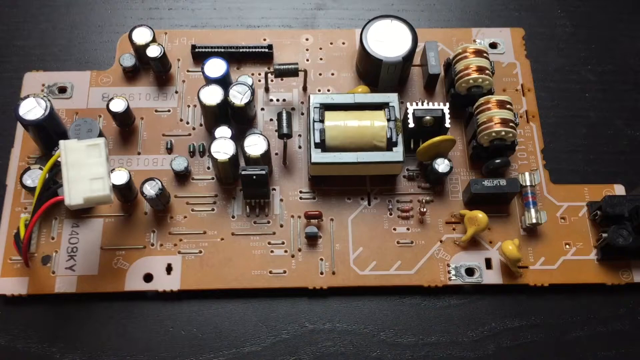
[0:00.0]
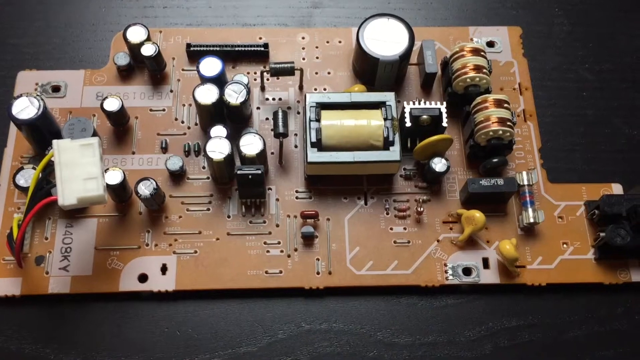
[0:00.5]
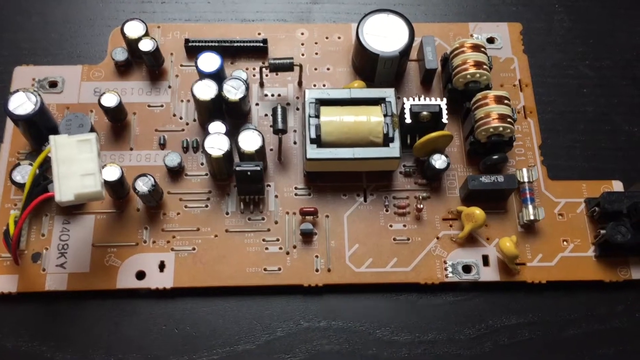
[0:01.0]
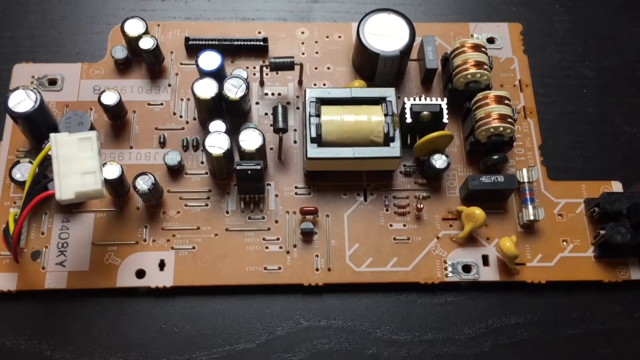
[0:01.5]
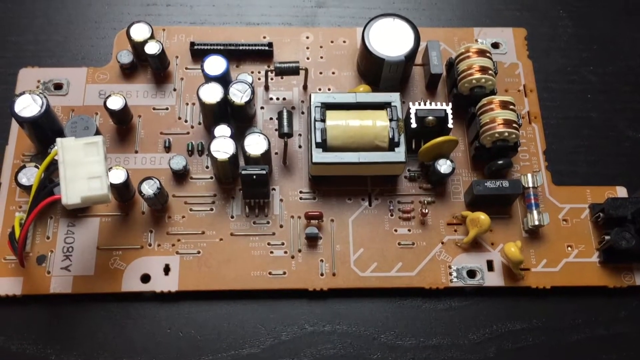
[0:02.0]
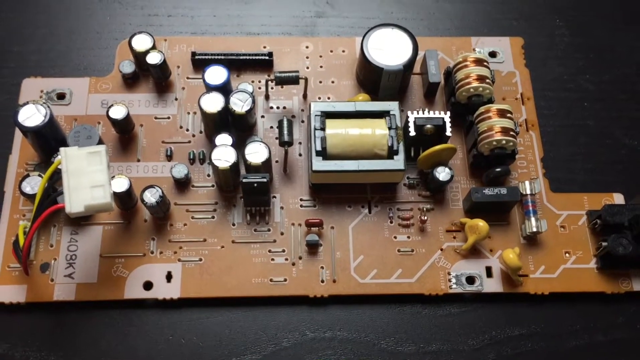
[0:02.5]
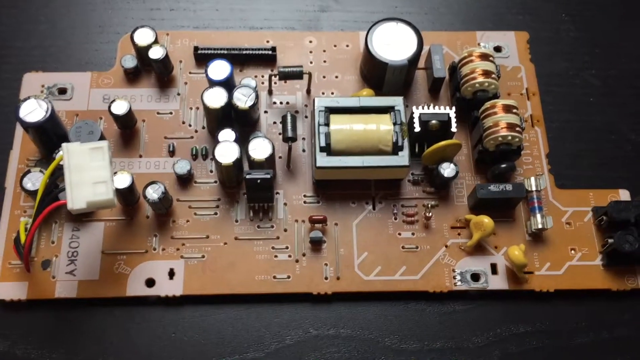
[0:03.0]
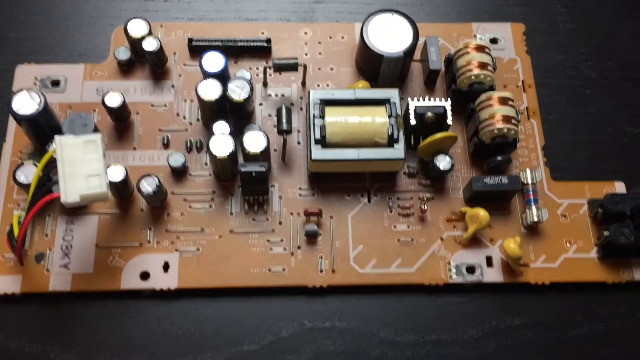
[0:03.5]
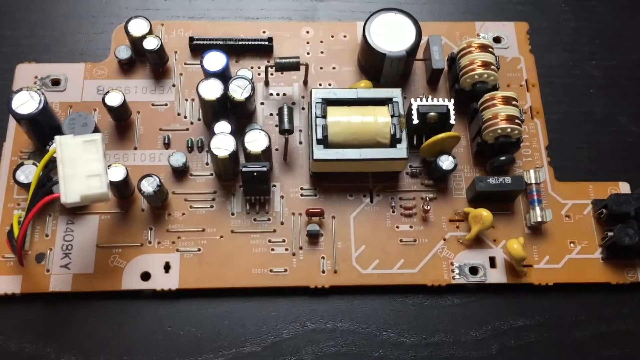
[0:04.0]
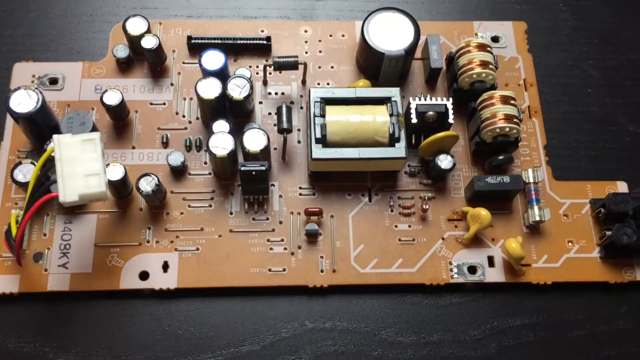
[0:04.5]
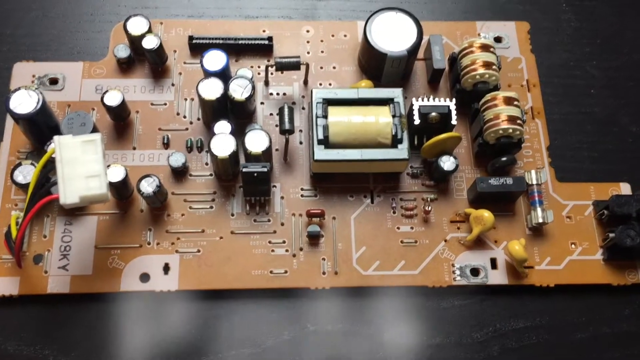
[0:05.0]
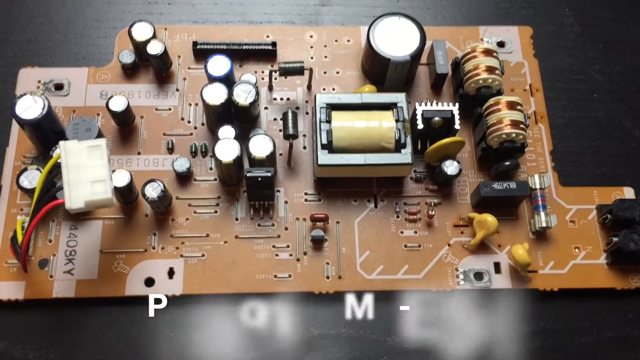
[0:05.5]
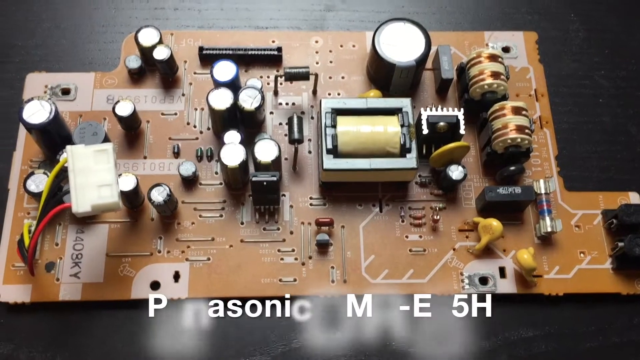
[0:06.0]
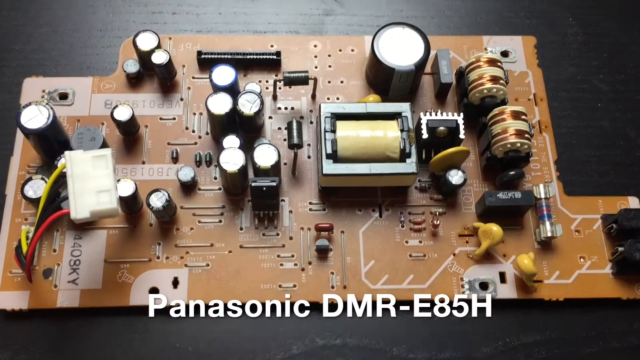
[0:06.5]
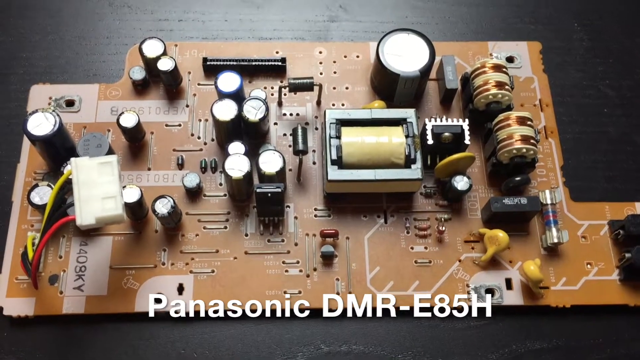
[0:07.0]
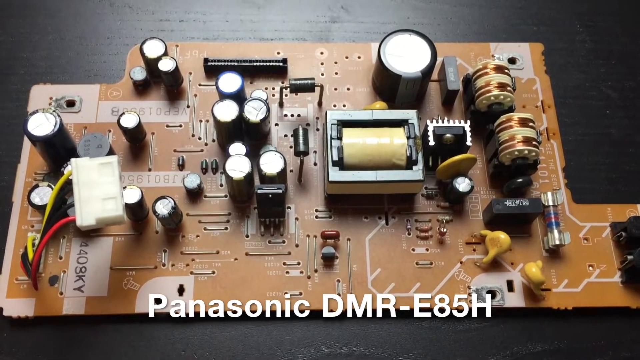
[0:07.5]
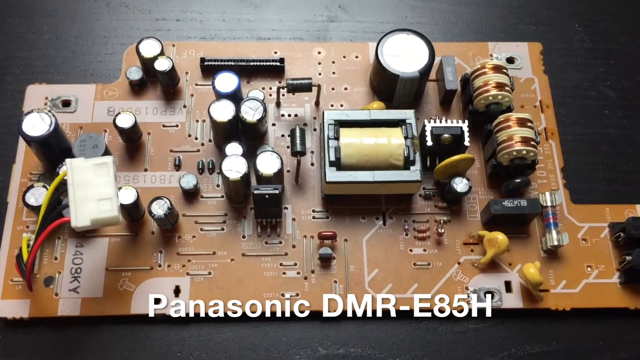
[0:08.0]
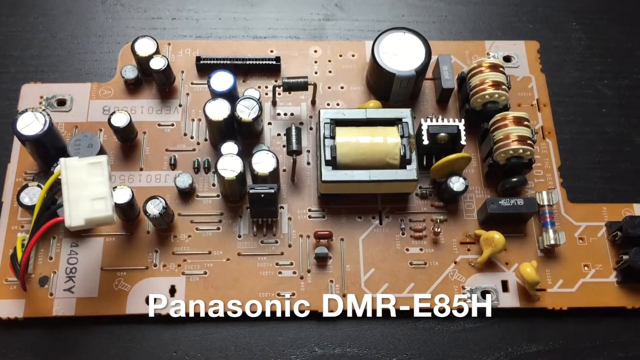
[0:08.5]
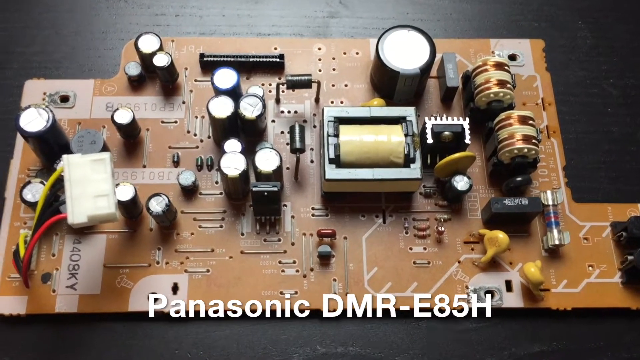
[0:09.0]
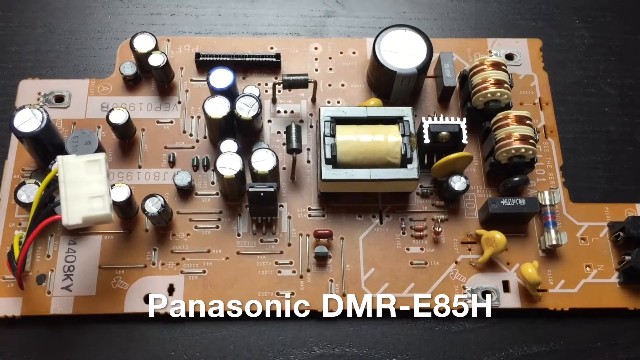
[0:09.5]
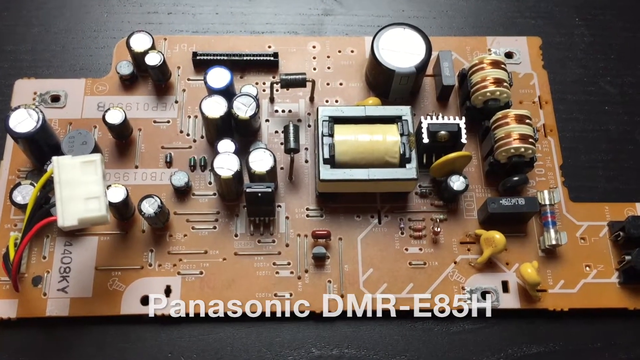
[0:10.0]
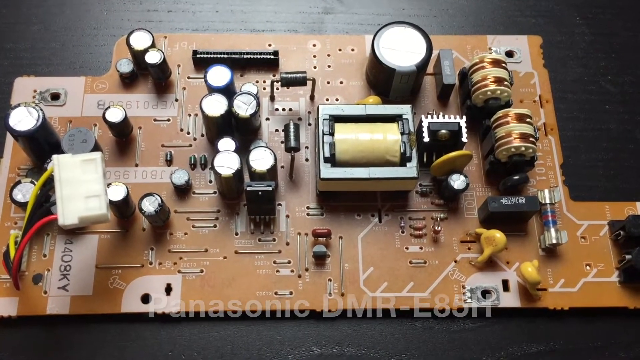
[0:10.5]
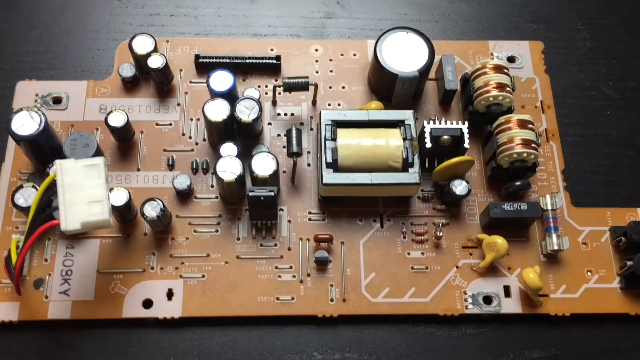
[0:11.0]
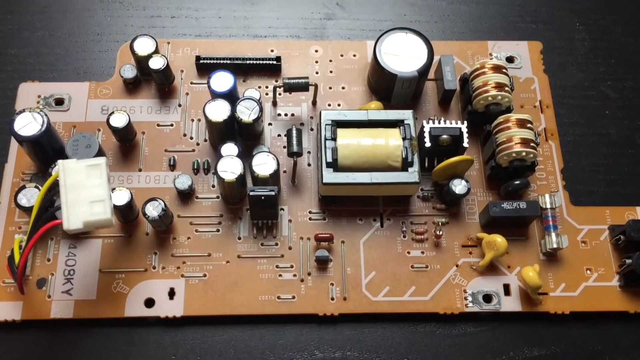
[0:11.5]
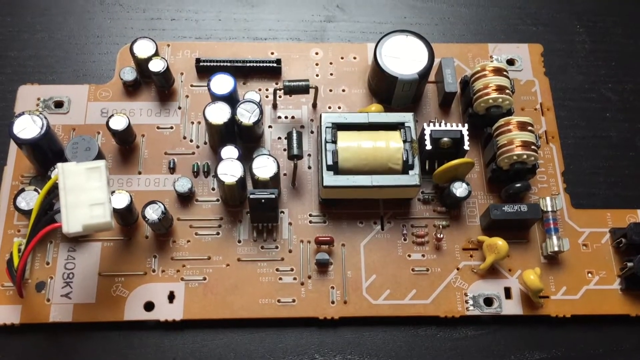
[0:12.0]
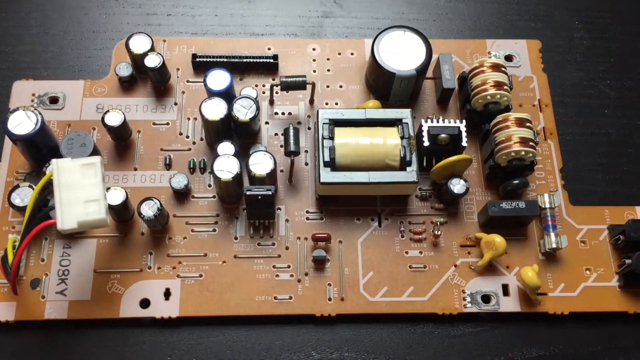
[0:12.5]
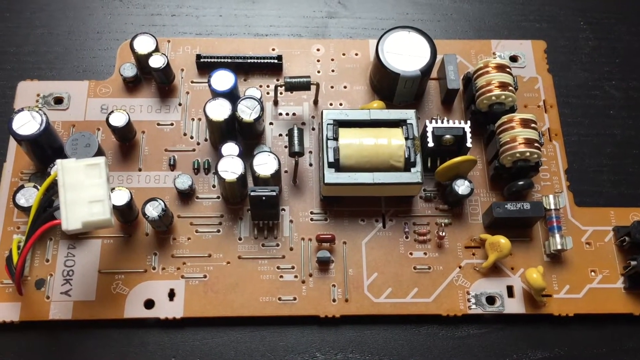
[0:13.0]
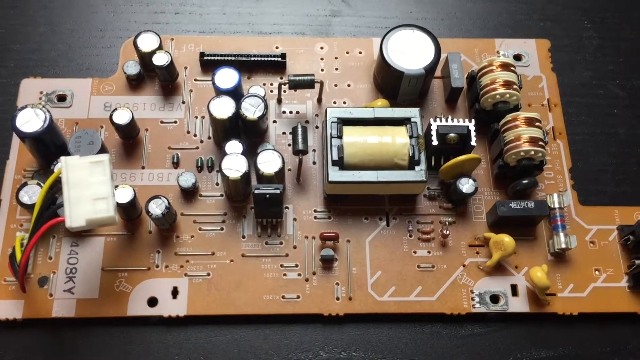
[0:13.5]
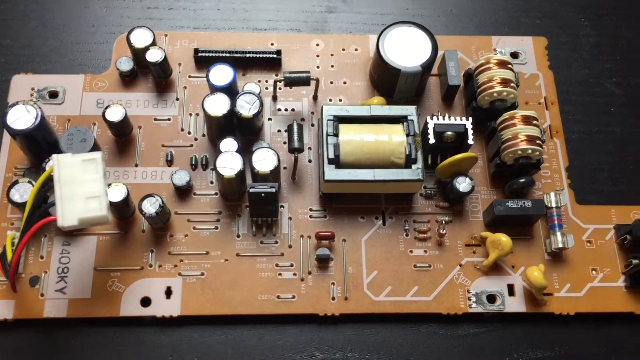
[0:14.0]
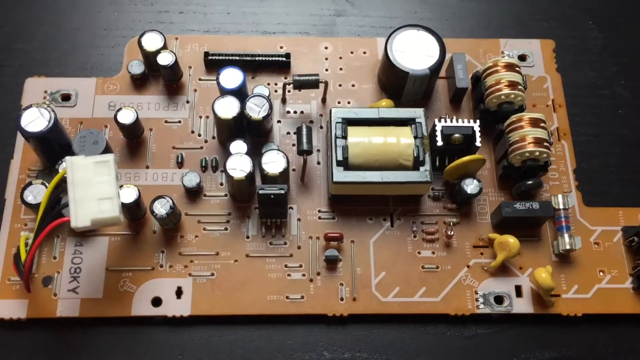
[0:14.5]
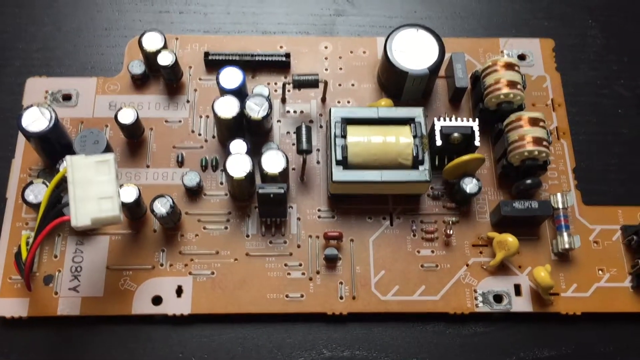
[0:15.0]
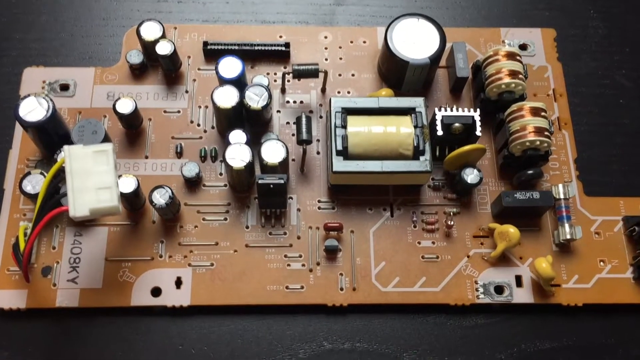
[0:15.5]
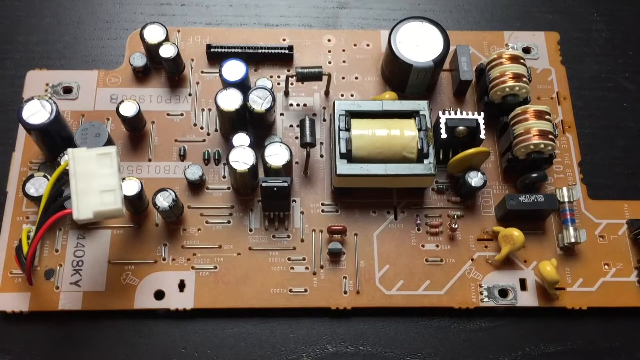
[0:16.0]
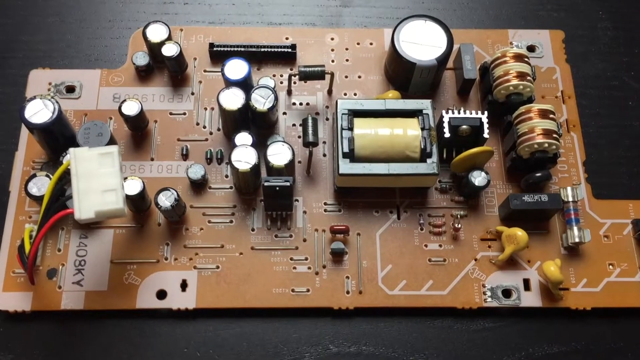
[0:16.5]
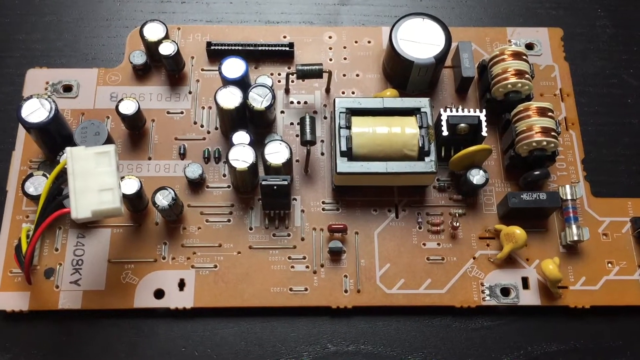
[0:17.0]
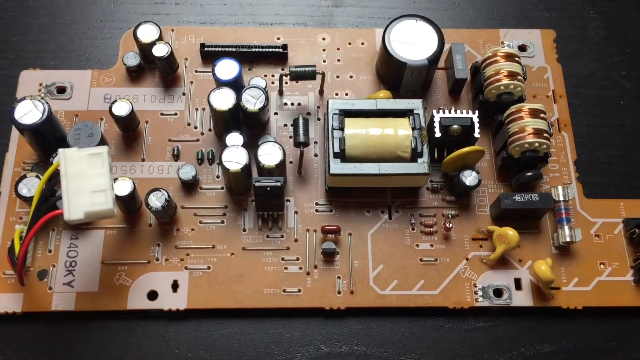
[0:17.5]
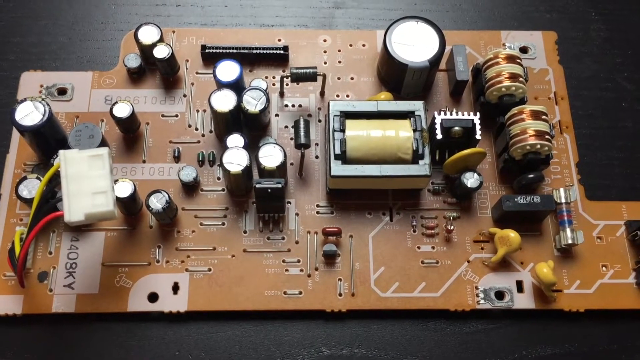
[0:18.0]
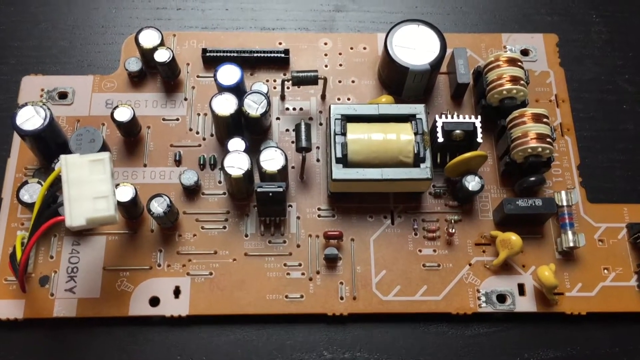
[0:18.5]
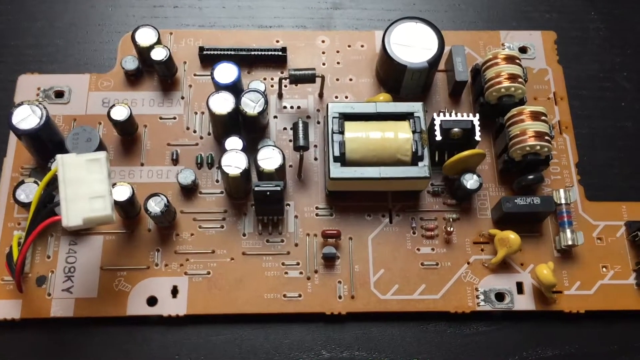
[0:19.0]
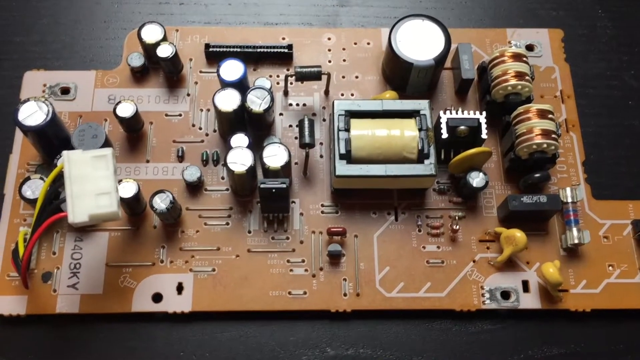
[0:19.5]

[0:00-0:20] A circuit board that looks like it has a bunch of knobs and wheels on it is shown. There seem to be printed numbers on the sides; one printed from top down seems to read "1408KY". A red and yellow wire sort of comes from the left of it and goes up to a small, sort of white rectangular box. In the center is a big white rectangle with a row of yellow, paper-like material inside it. Text fades in letter by letter, naming the device as a "Panasonic DMR-E85H". The camera shakes as the person holds it, probably looking down at it. There is a sort of black box on the right end. The overall shape looks like a rectangle with a little bar above it and a little extension on the right, about a third of the length from the bottom up, with the black box.